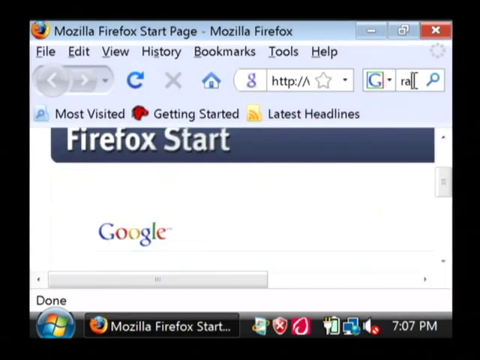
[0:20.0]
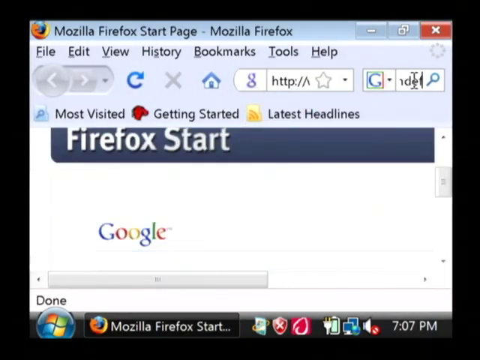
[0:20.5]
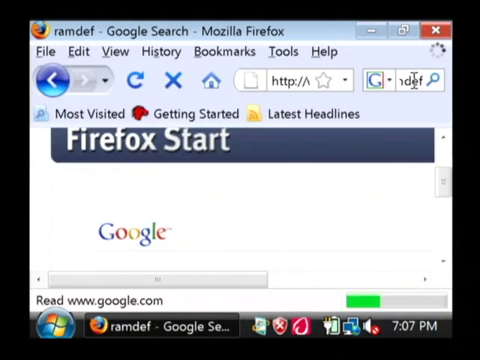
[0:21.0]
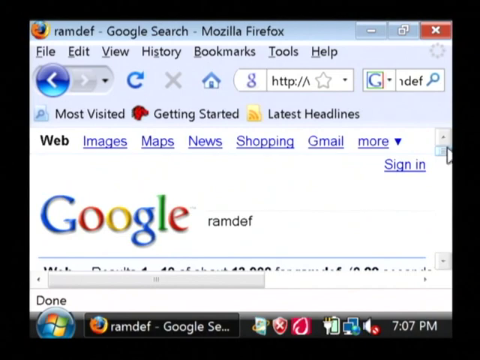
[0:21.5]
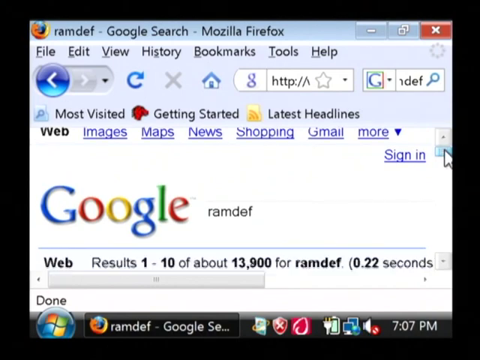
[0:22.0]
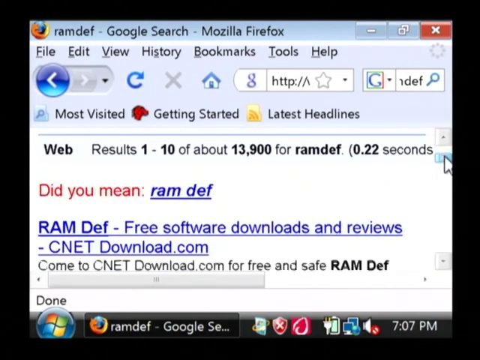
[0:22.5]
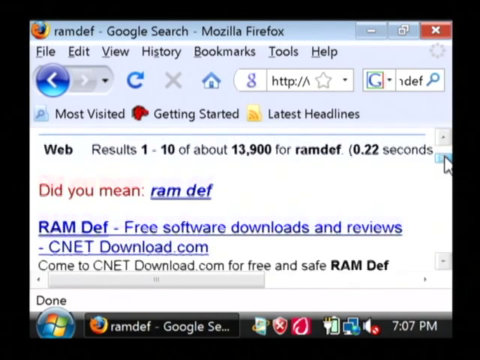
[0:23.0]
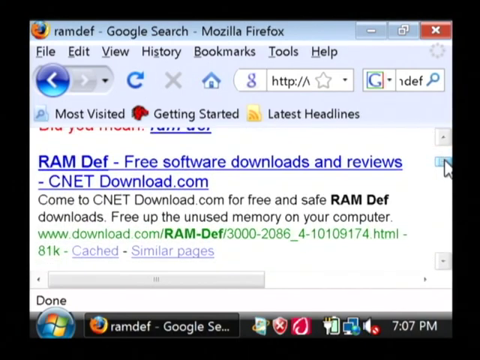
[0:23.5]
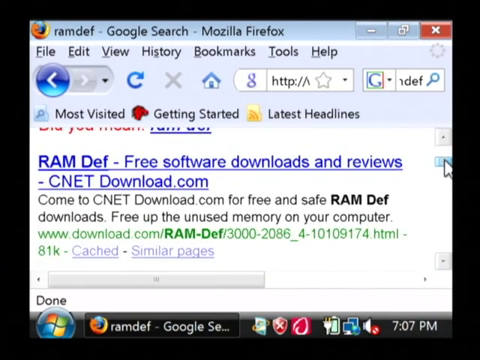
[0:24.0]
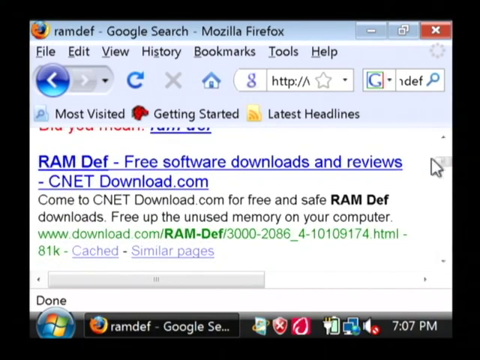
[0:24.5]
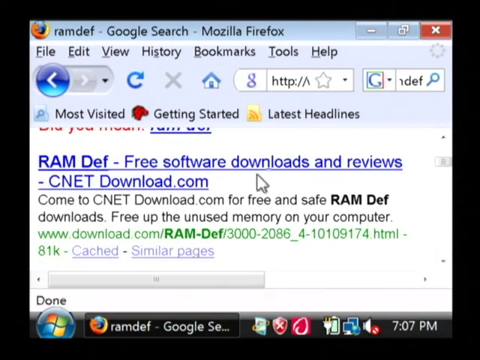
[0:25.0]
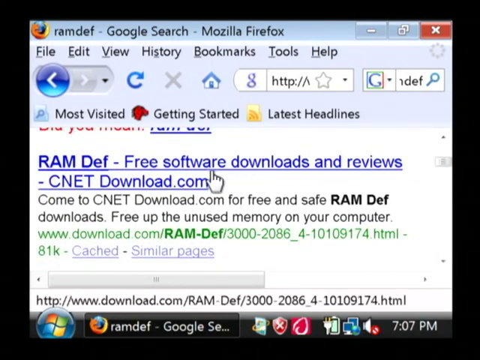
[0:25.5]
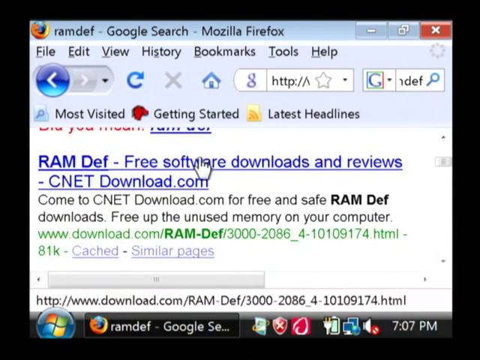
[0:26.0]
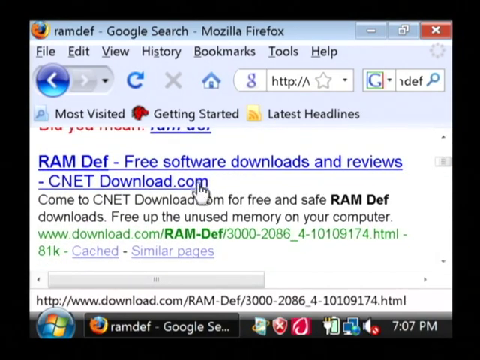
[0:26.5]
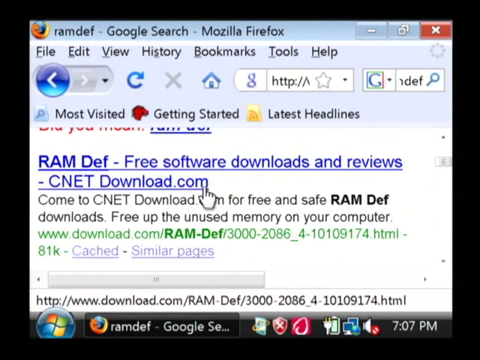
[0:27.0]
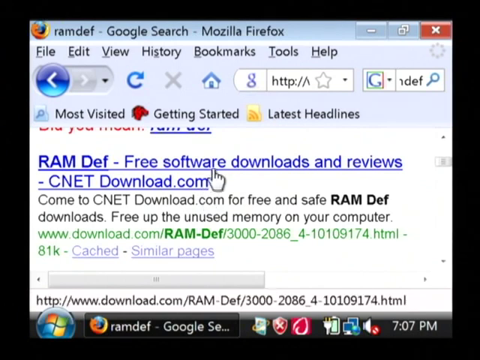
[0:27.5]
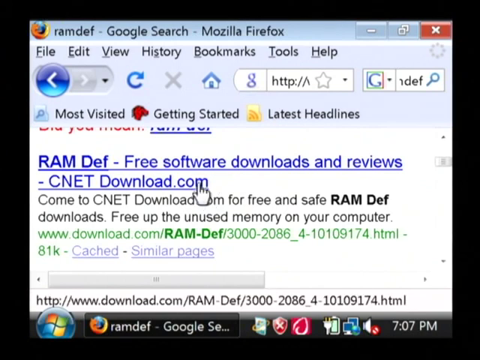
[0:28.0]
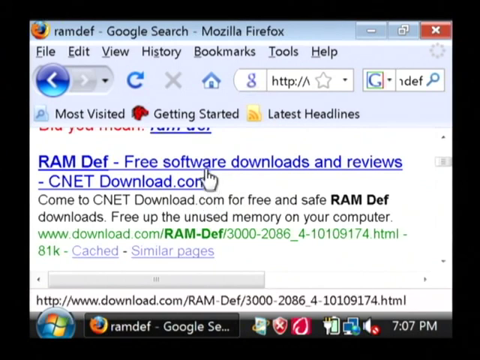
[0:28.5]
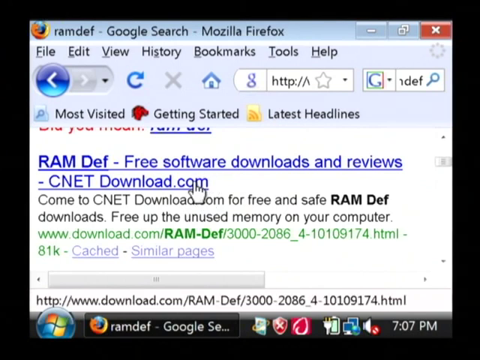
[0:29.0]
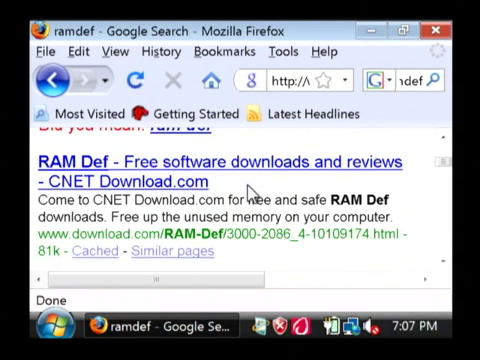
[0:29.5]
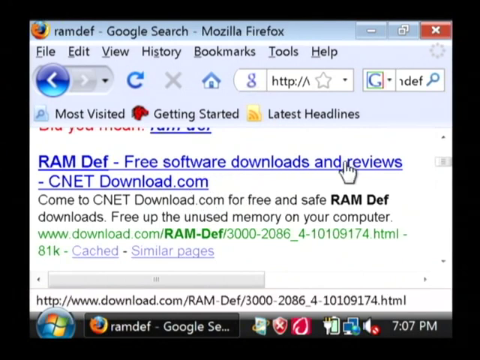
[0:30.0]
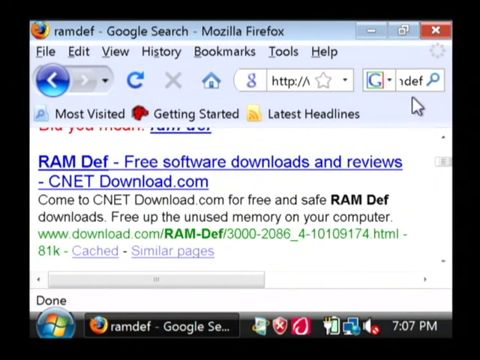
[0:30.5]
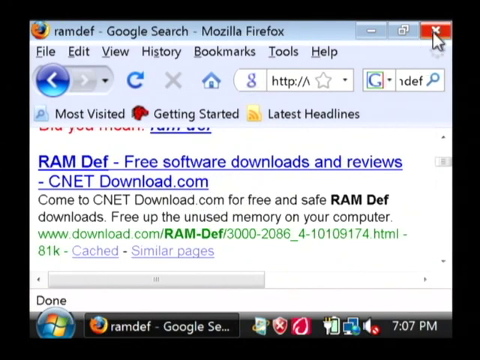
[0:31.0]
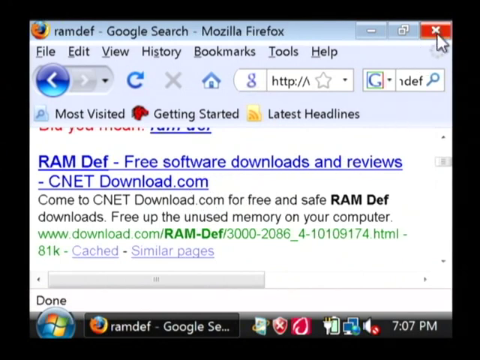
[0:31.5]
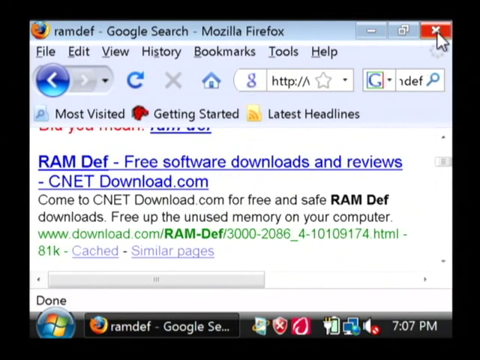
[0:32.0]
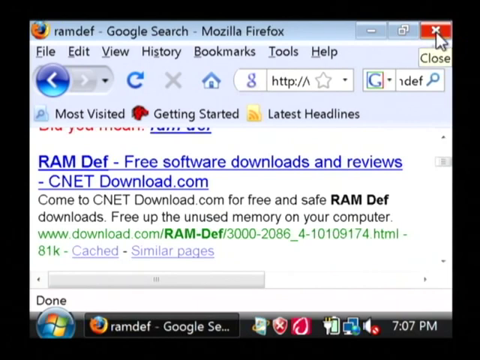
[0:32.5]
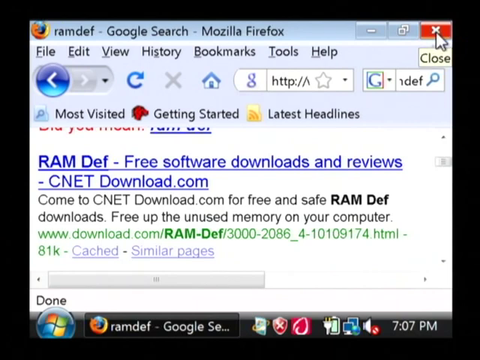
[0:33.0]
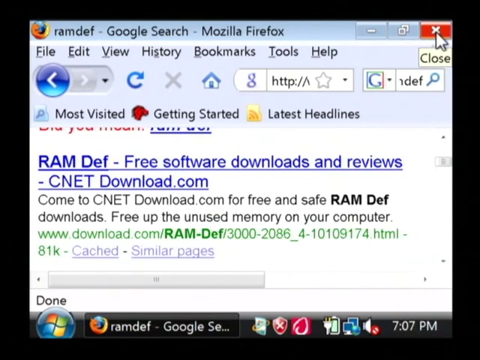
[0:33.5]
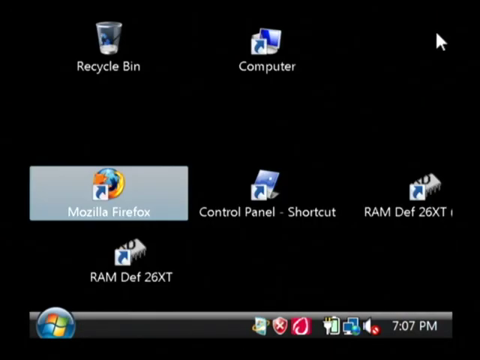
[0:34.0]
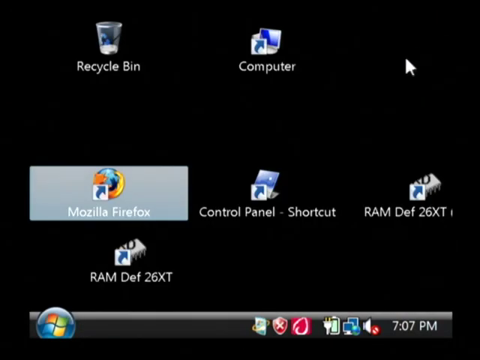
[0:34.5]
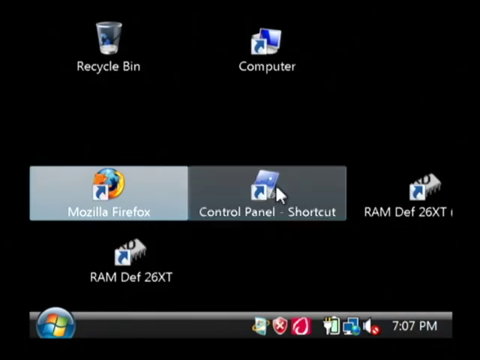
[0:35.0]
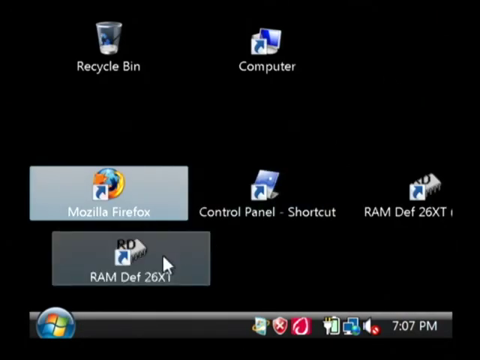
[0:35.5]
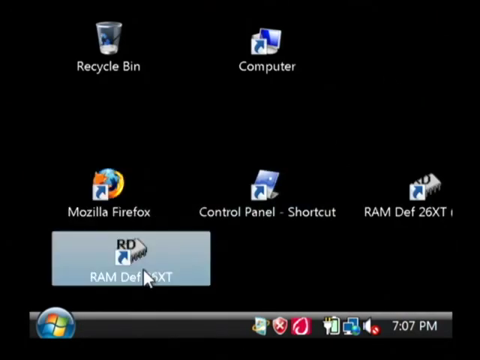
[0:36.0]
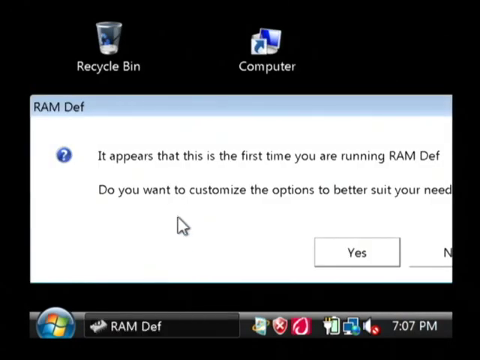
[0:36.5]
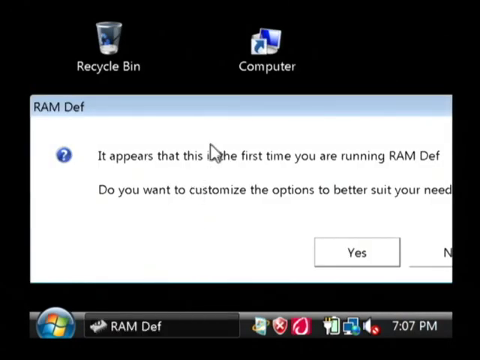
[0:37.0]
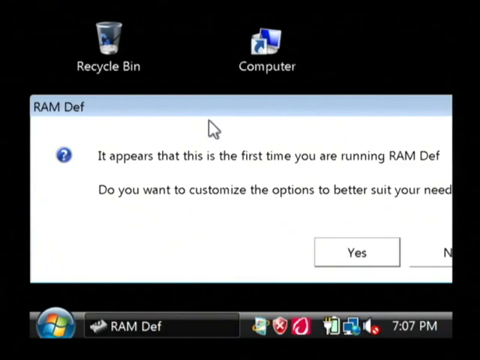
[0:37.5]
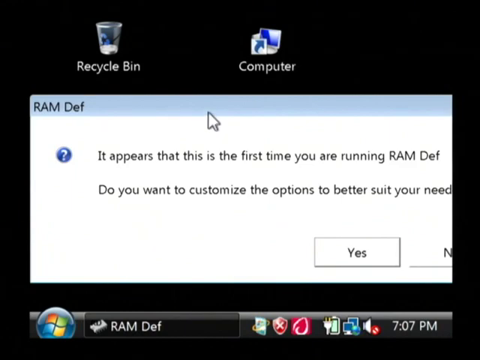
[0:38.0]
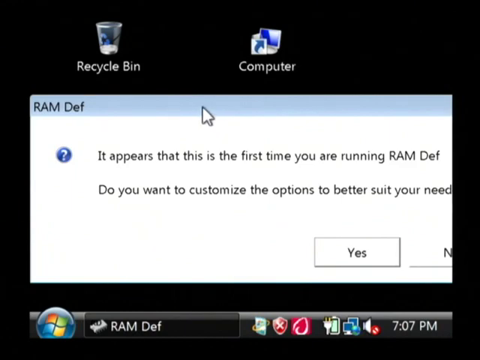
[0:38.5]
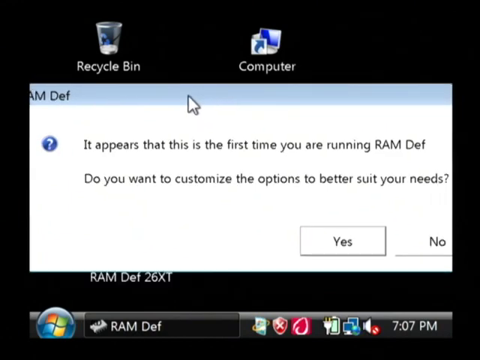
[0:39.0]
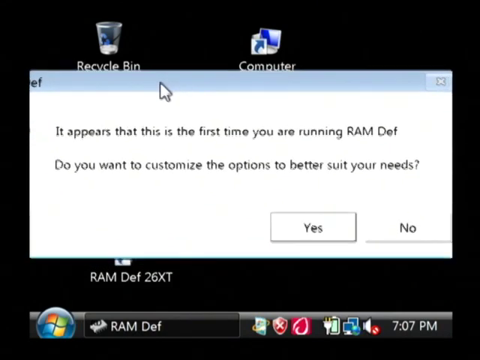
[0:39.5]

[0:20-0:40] On the Mozilla Firefox start page, the man searches for RAM dev and scrolls down to find it so he can download it. He finds a RAM dev result from CNET software downloads and reviews and downloads it. He then closes Mozilla Firefox and goes to a home page where he can see the RAM dev he just downloaded. He looks for it, finds it and opens the app, then adjusts the app or the instructions that show up in it. The Mozilla window shows File, Edit, View, History, Bookmarks, Tools and a button for help, as well as Most Visited, Getting Started and Latest Headlines.